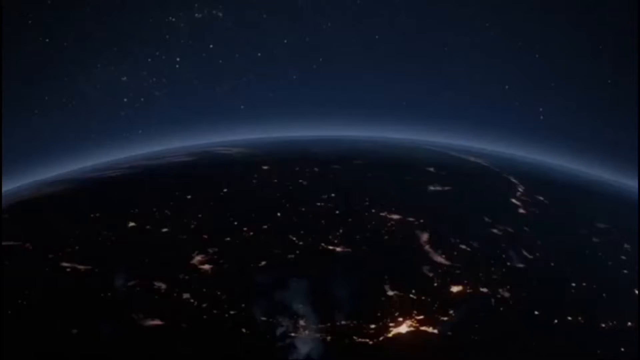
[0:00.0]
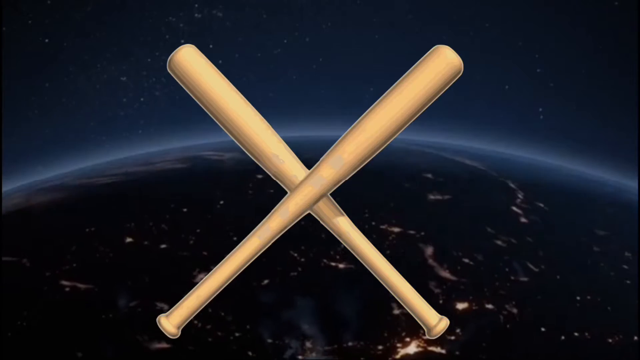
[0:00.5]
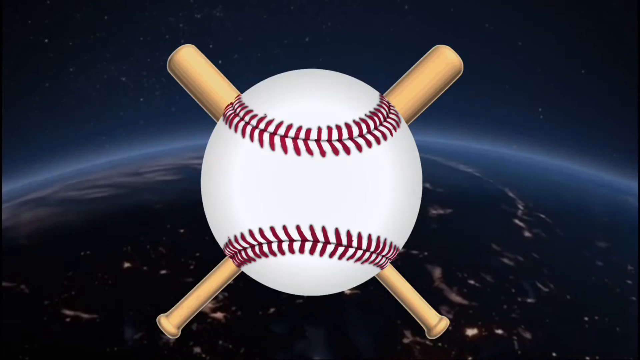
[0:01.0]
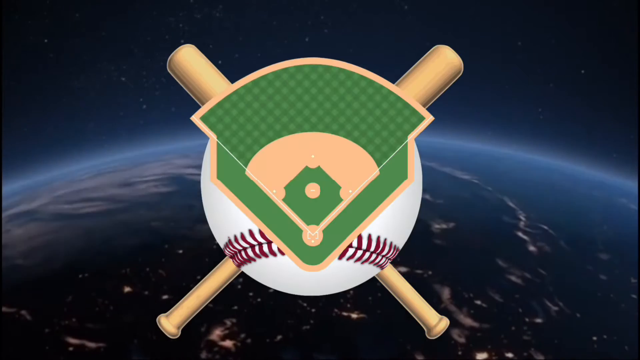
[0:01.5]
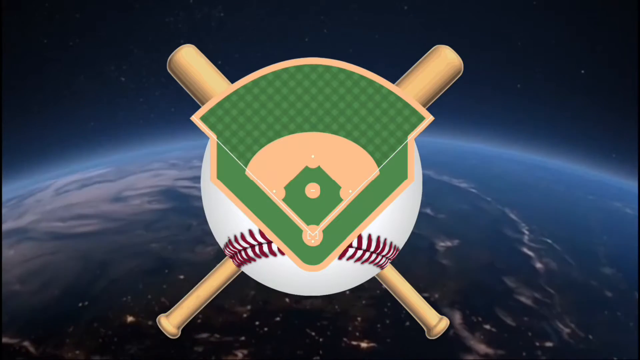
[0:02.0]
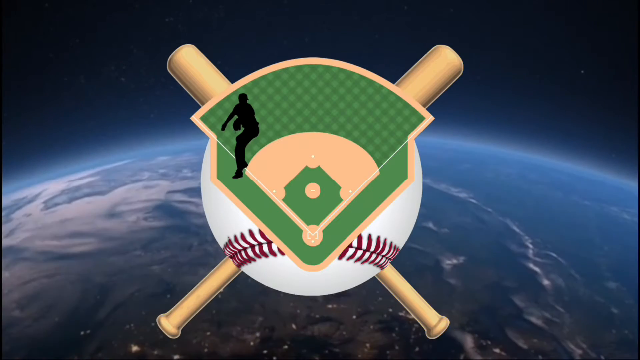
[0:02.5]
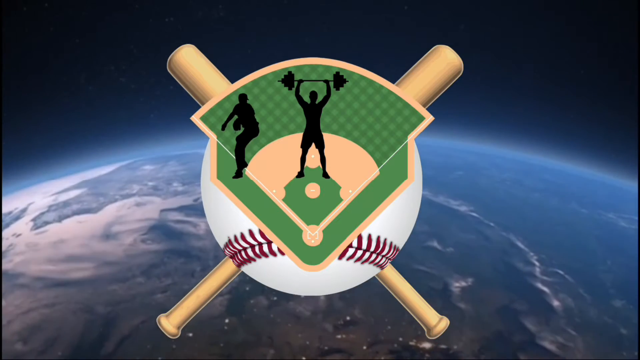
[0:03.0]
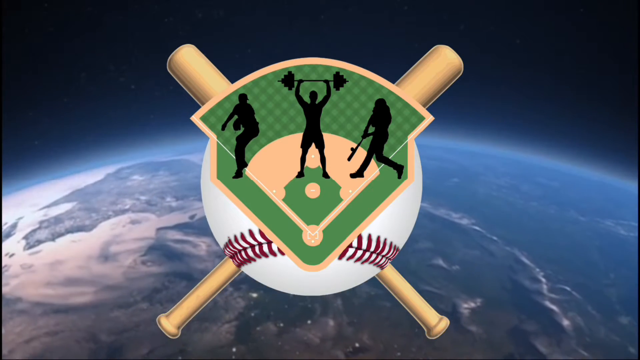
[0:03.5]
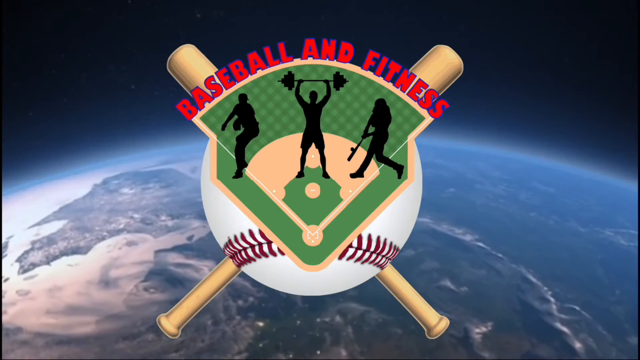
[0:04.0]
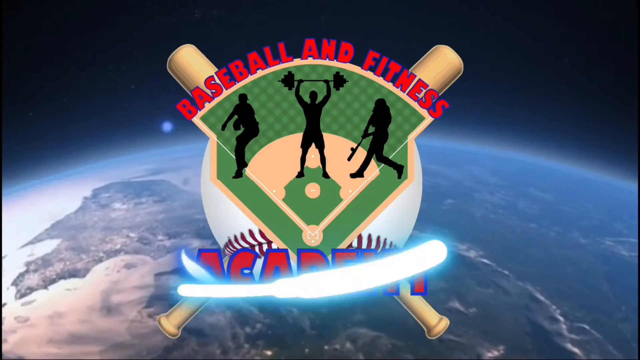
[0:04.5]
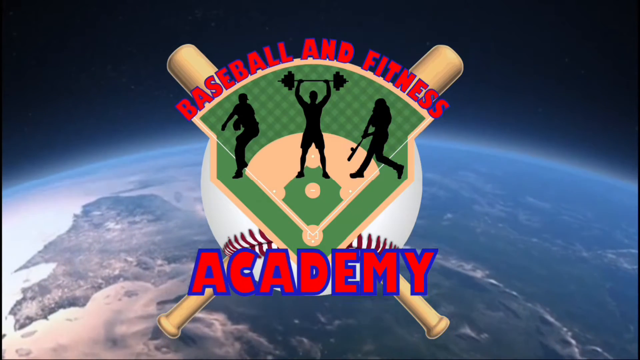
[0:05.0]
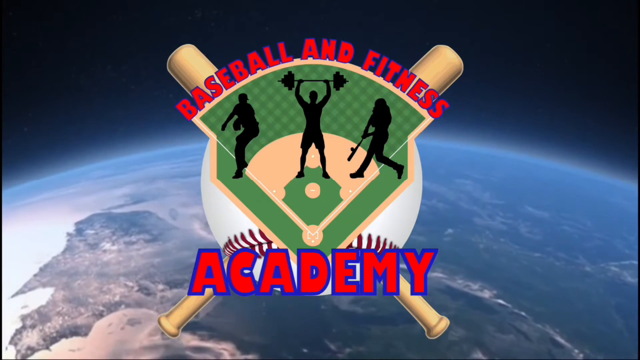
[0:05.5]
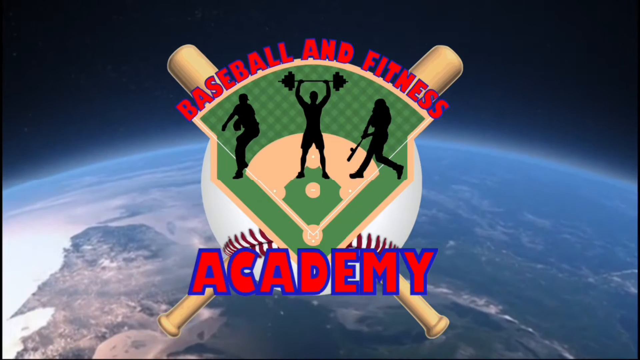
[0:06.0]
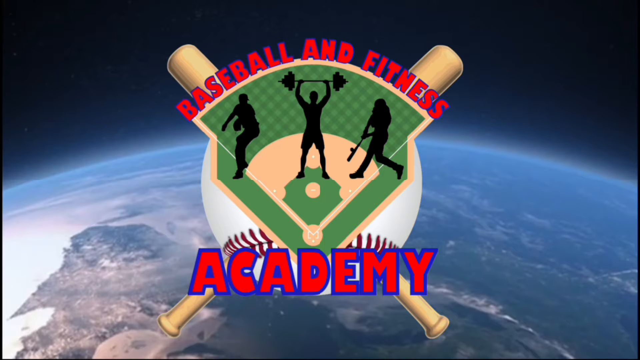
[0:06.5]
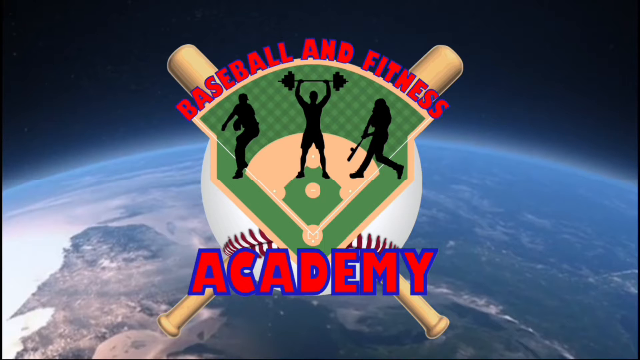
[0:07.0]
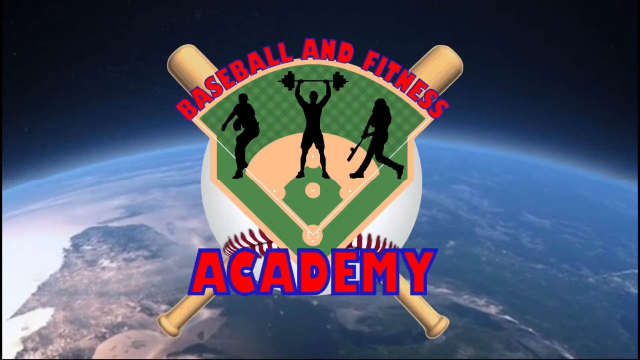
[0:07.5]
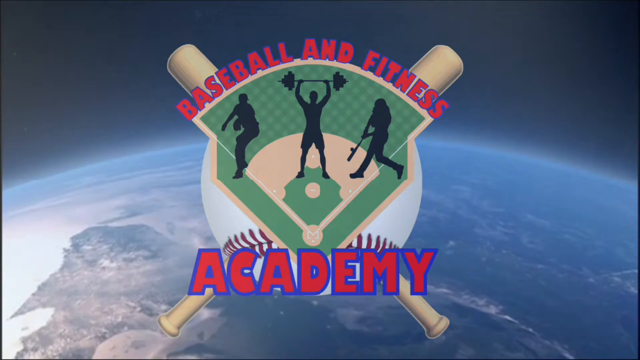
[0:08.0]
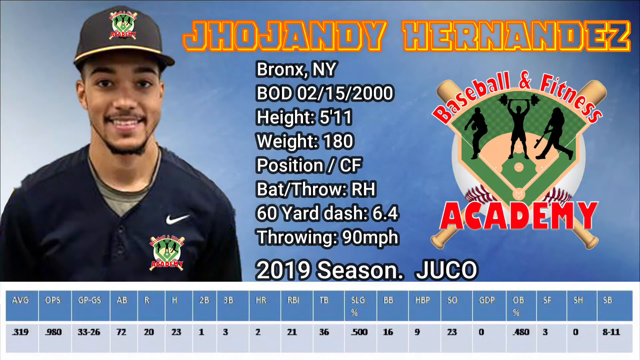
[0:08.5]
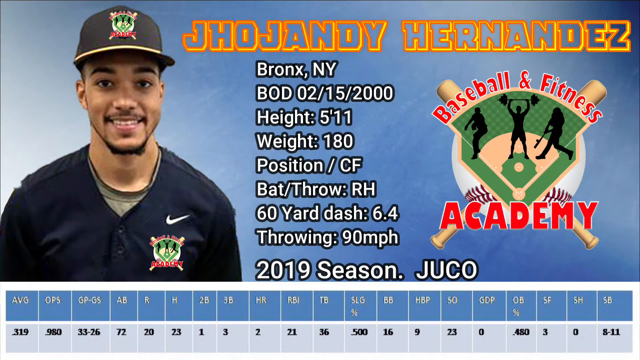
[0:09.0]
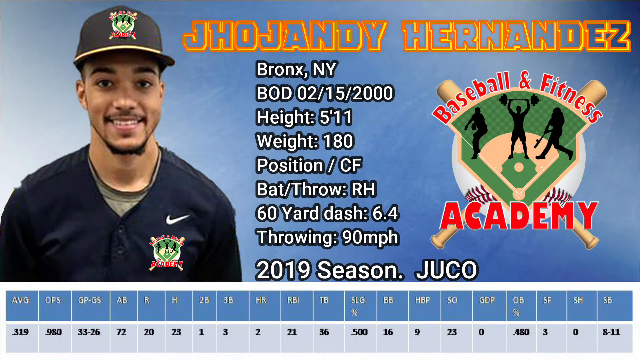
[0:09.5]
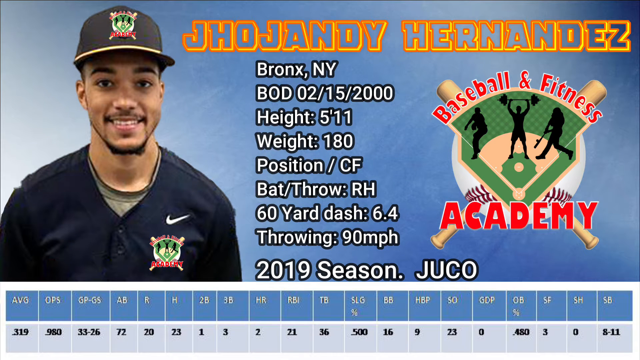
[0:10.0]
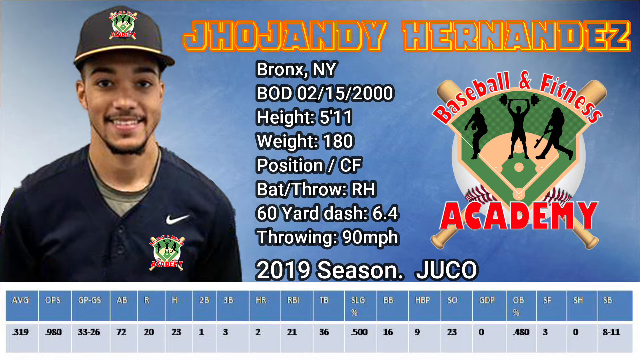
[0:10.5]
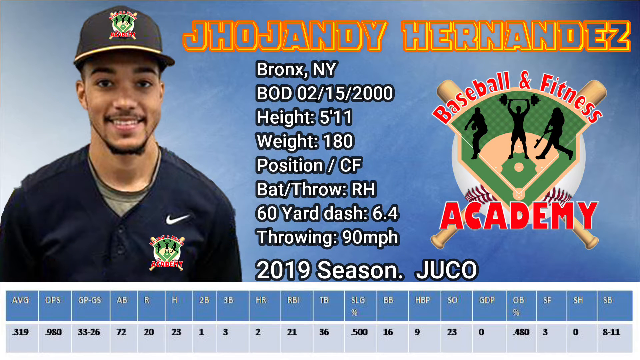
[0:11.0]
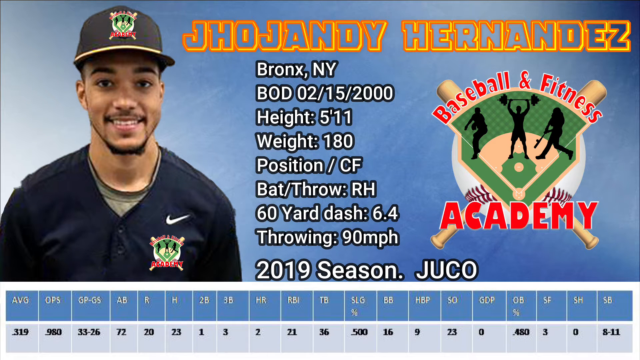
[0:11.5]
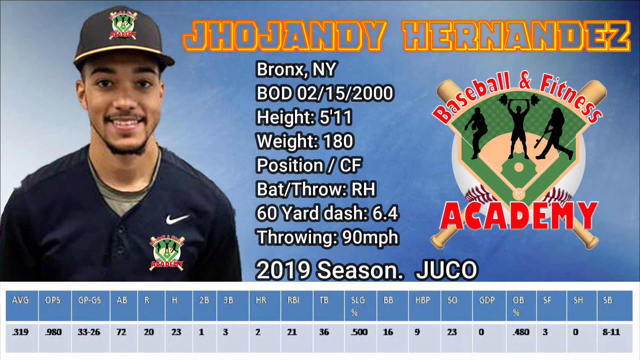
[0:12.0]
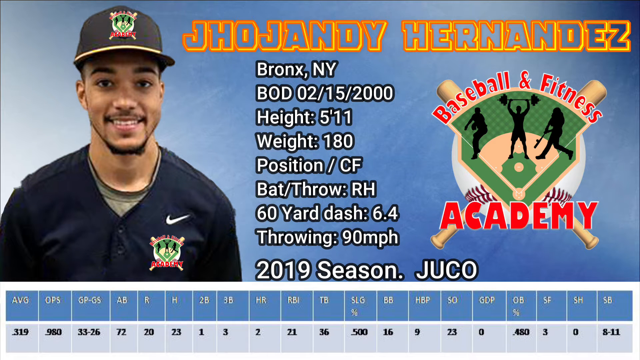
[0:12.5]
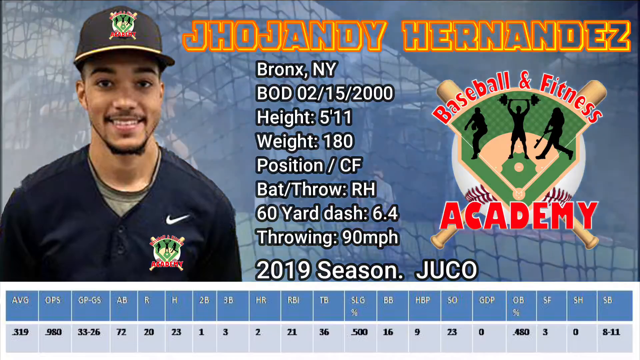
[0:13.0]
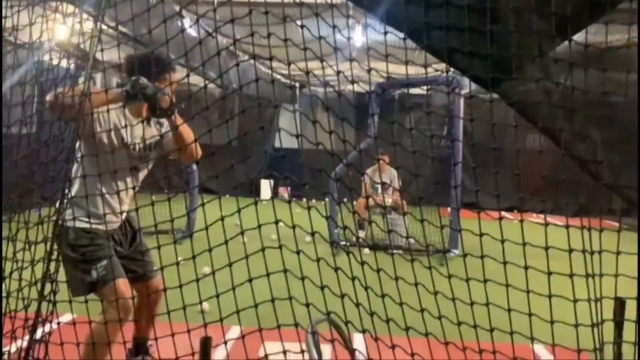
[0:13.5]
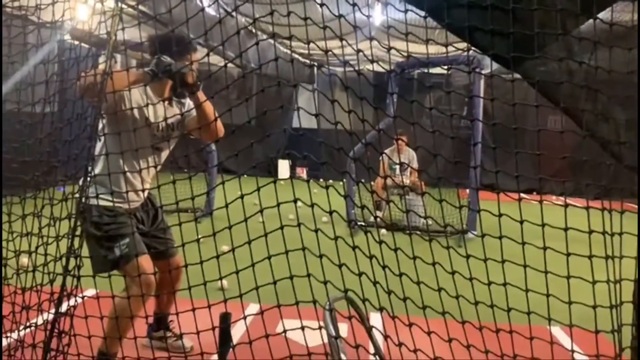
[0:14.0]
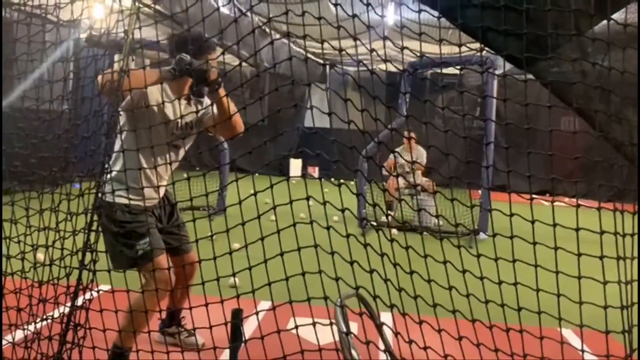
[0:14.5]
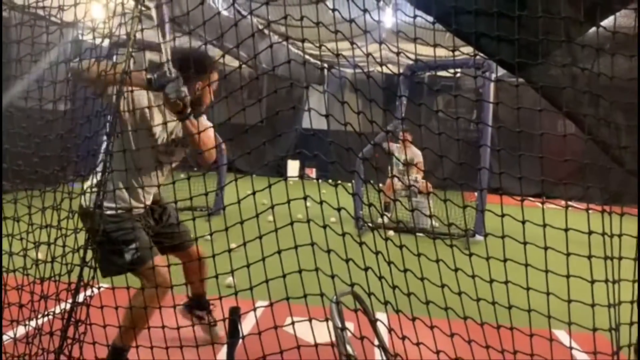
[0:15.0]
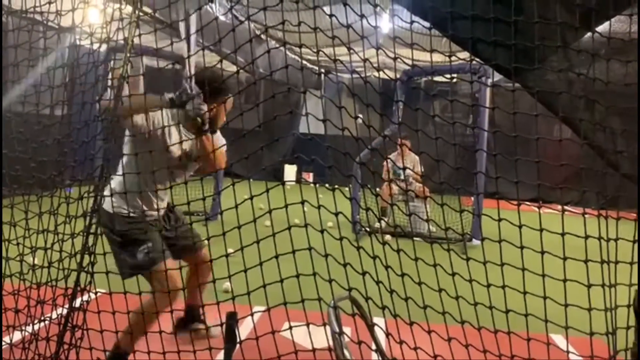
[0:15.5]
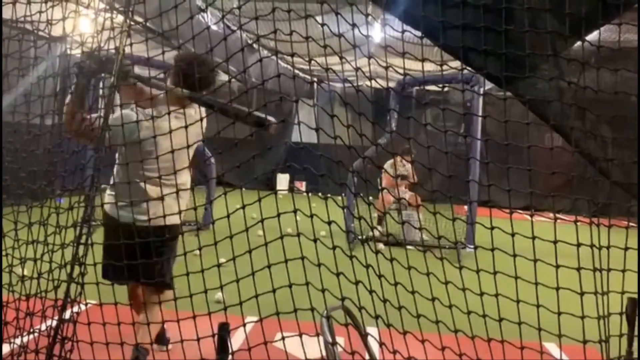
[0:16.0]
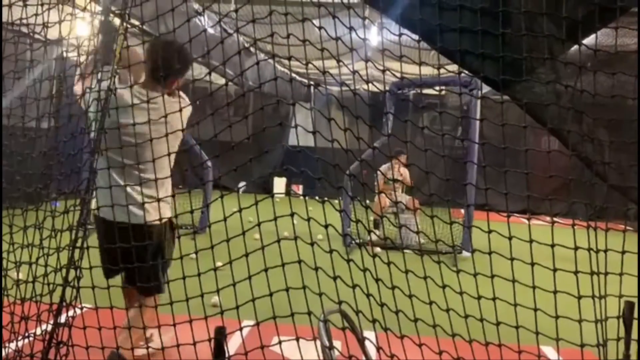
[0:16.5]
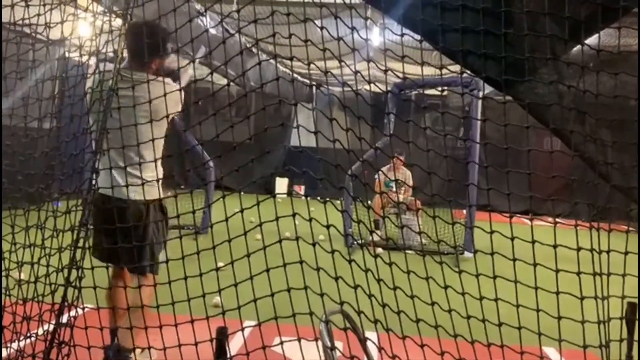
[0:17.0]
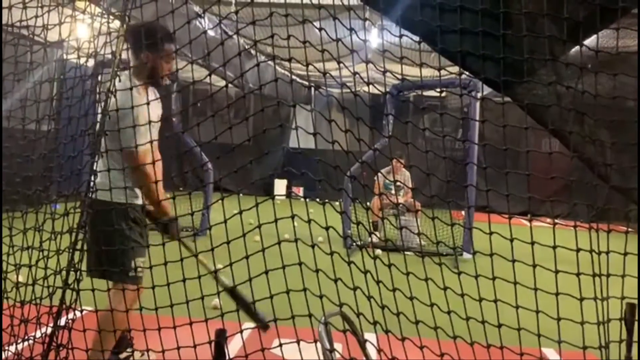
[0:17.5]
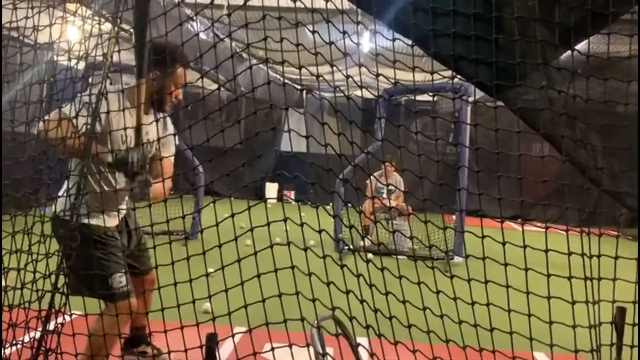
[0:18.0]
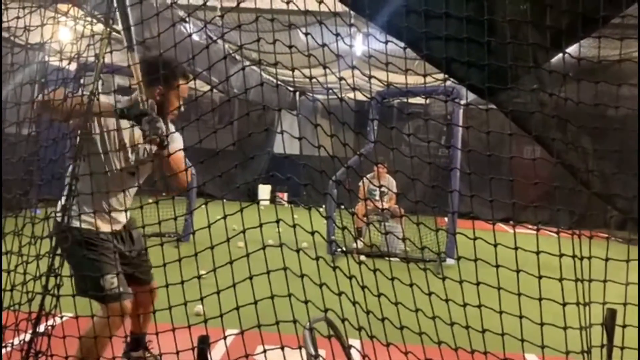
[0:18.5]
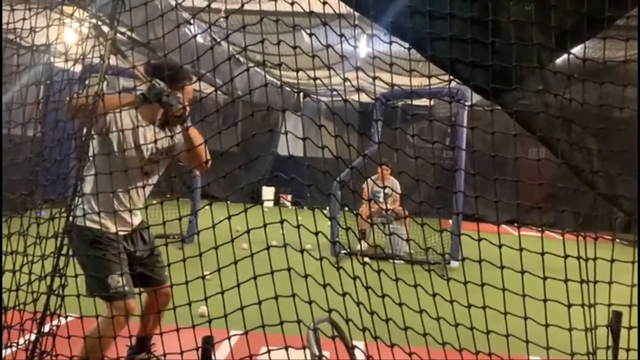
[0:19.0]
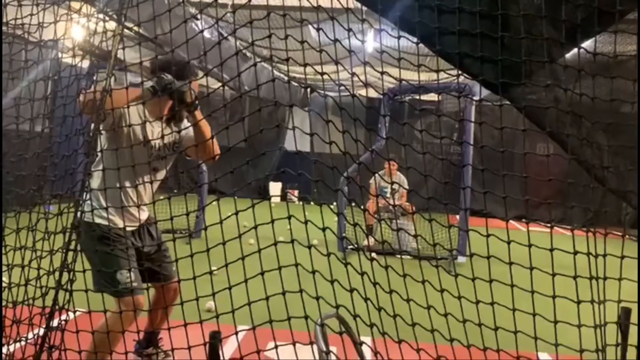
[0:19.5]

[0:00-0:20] The video opens on what looks like the outer portion of a globe spinning around, then the text "Baseball and Fitness Academy" appears along with information about a player named Joe Jandy Hernandez. The screen says he is from the Bronx in New York, with a birth date of 02-15-2000, a height of 5'11", a weight of 180, and a position of centerfield. Bat/throw is listed as "RH", the 60-yard dash as 6.4, and throwing as 90 miles per hour. Under "2019 season" it says "J-U-C-O", and numbers at the bottom of the screen show some of his averages. Next comes footage of him, a baseball player, hitting the ball as someone throws it to him.